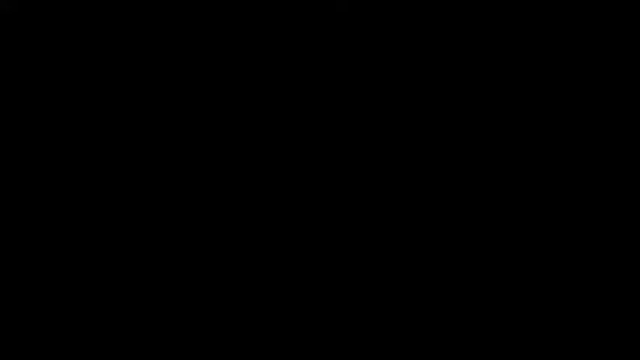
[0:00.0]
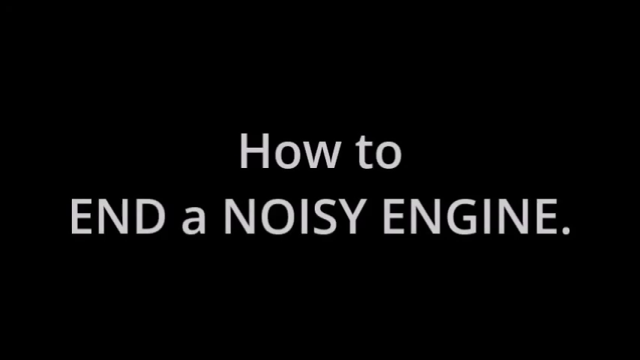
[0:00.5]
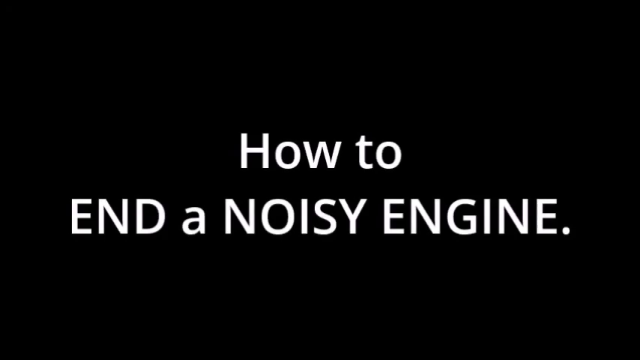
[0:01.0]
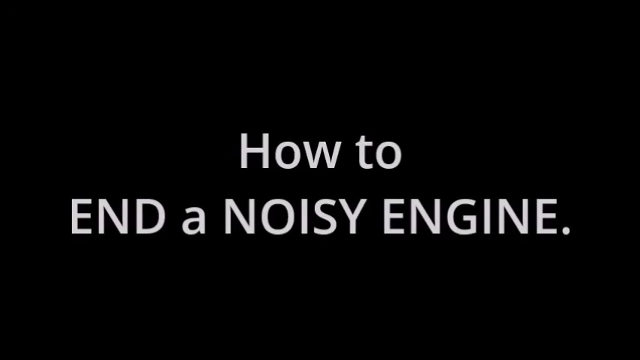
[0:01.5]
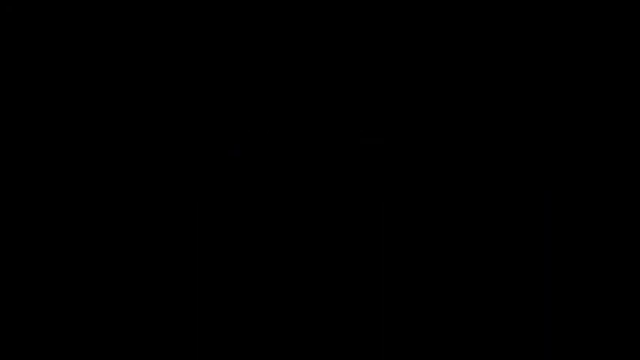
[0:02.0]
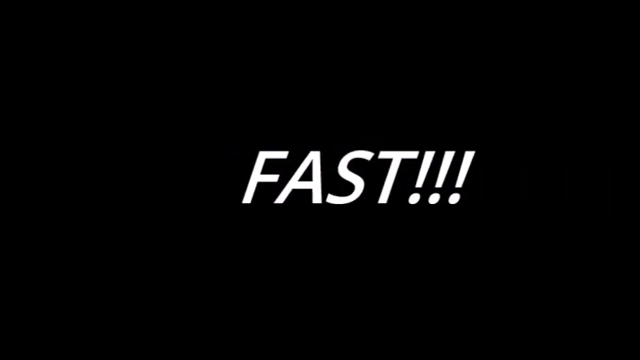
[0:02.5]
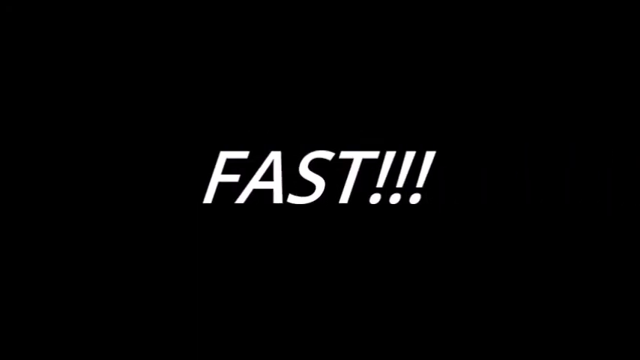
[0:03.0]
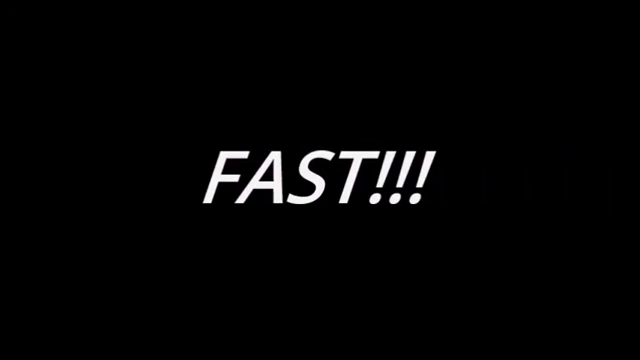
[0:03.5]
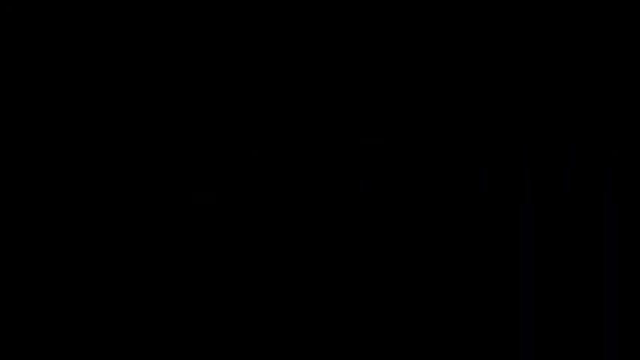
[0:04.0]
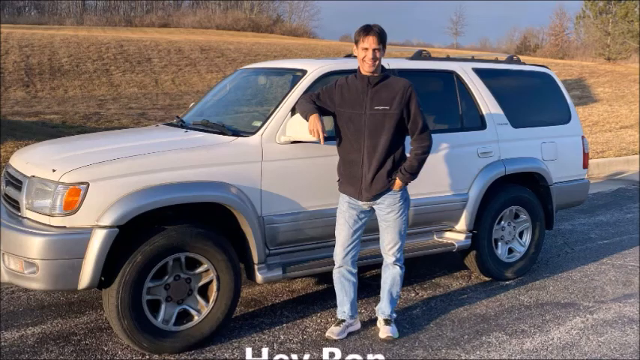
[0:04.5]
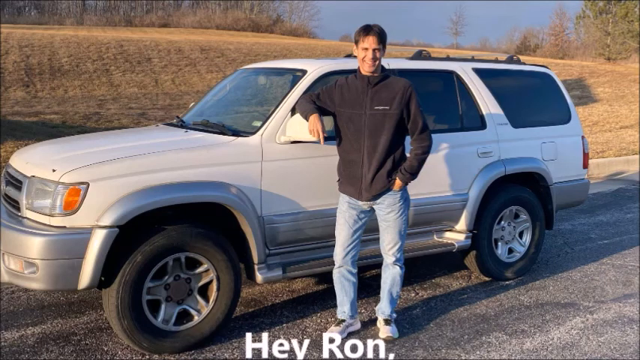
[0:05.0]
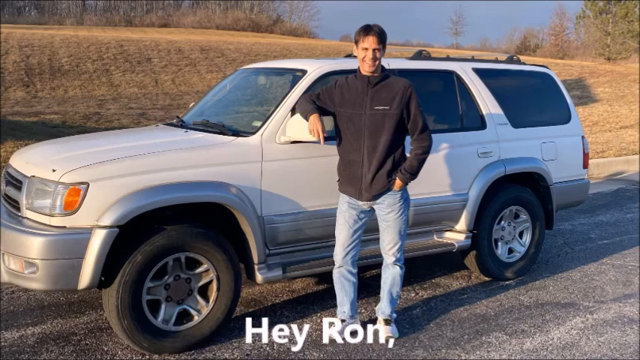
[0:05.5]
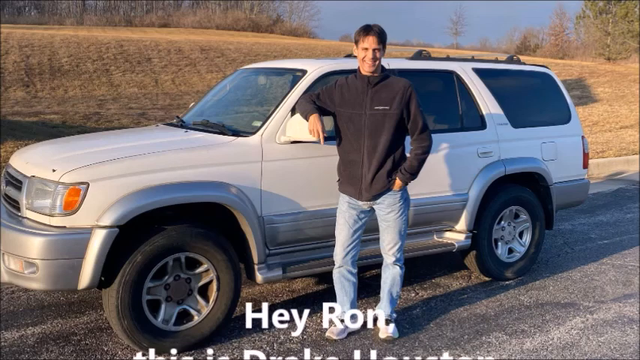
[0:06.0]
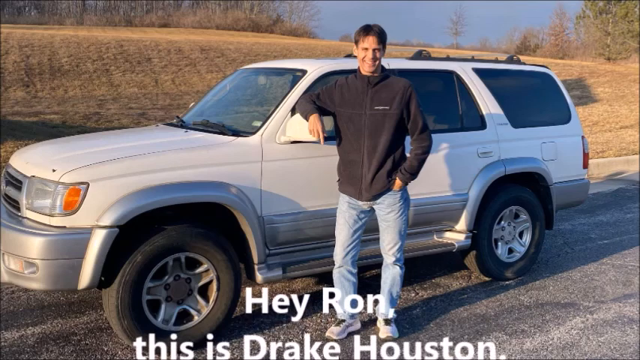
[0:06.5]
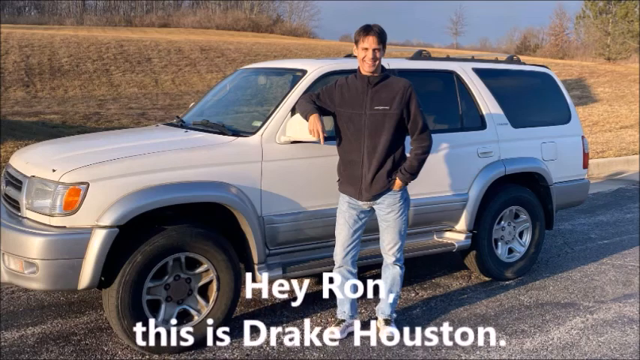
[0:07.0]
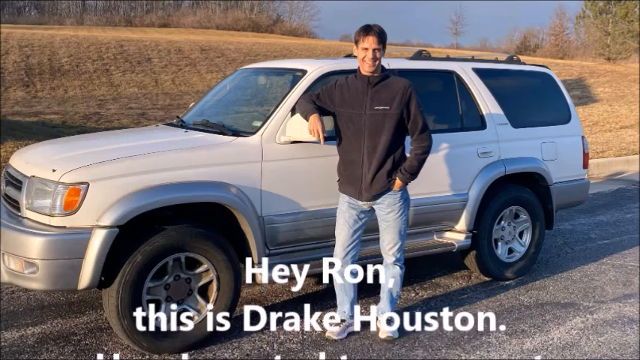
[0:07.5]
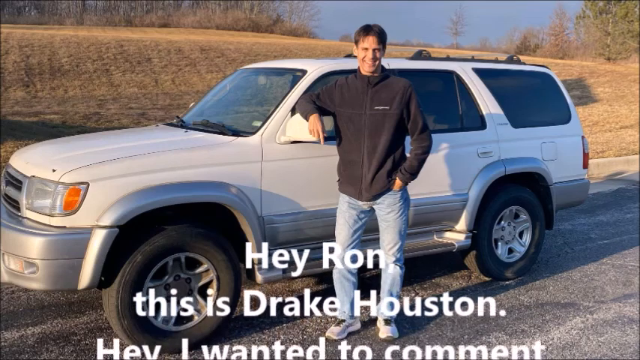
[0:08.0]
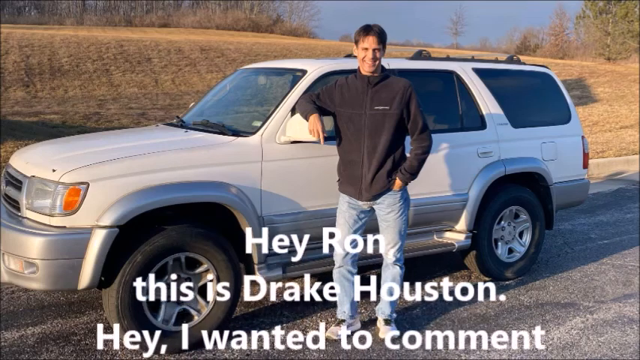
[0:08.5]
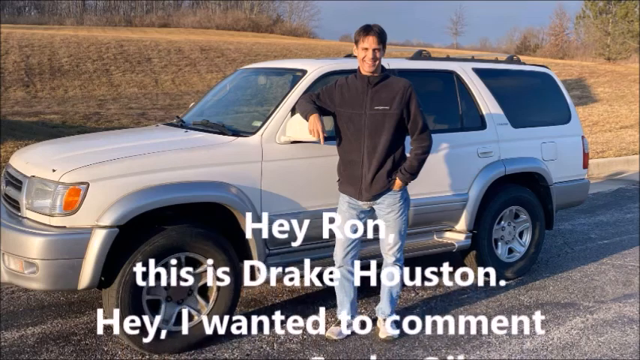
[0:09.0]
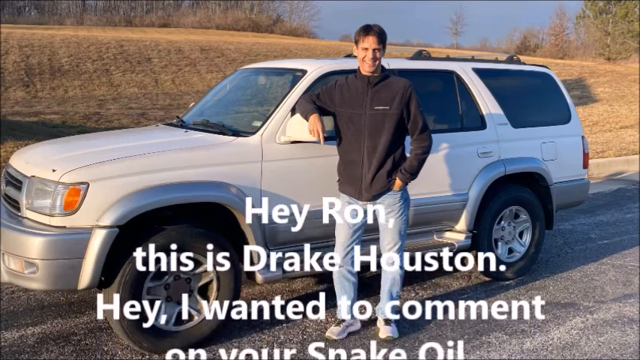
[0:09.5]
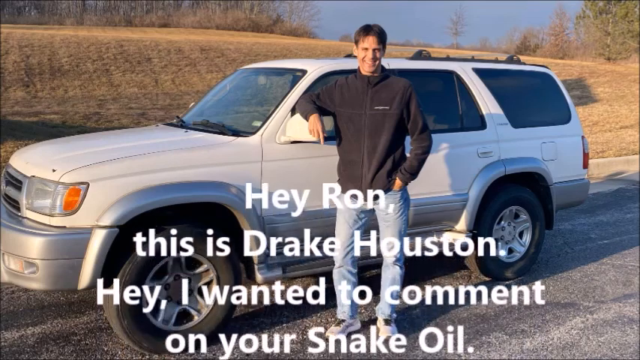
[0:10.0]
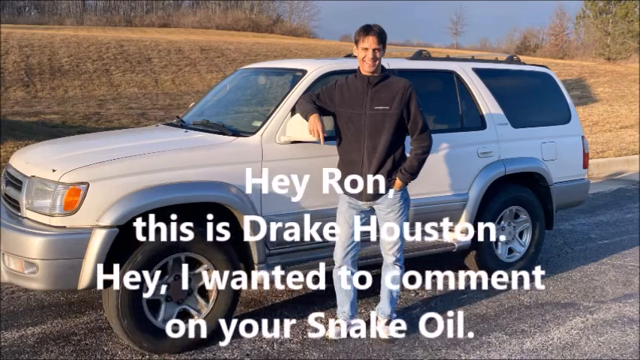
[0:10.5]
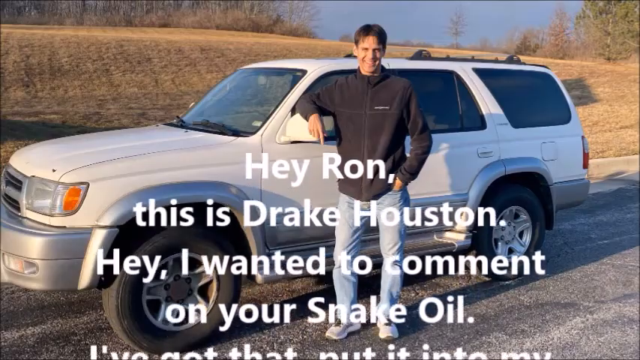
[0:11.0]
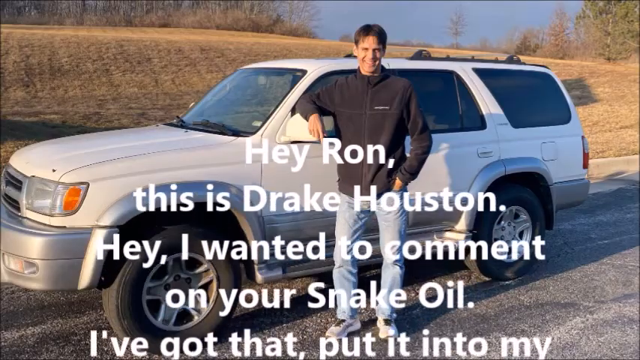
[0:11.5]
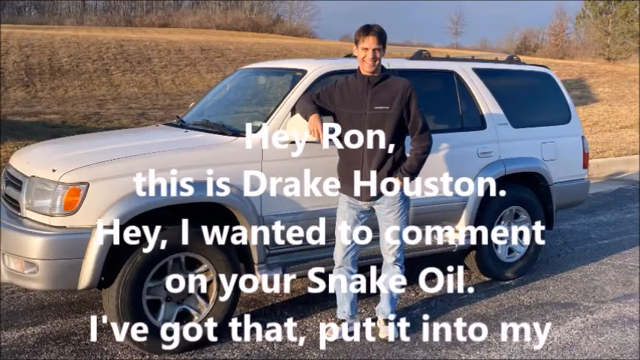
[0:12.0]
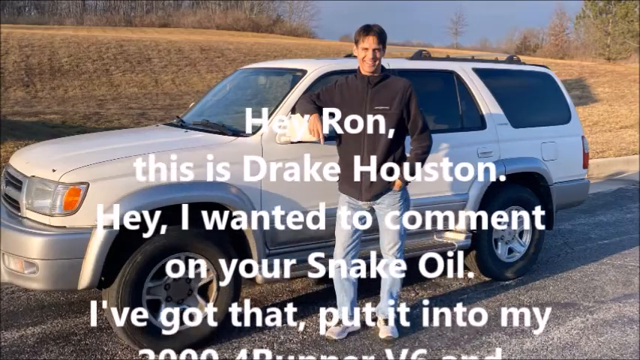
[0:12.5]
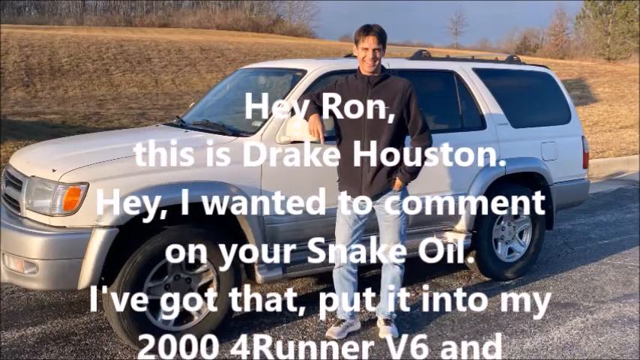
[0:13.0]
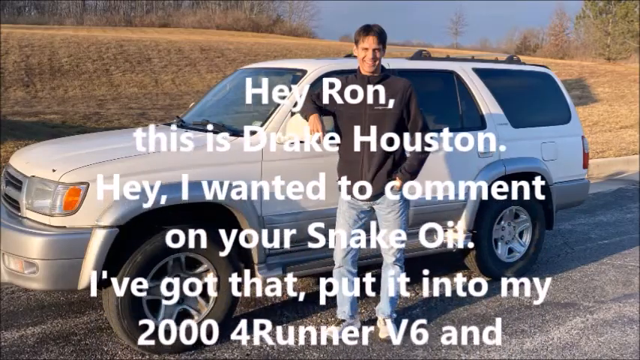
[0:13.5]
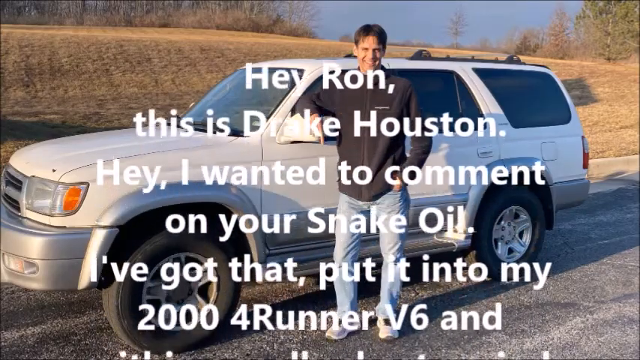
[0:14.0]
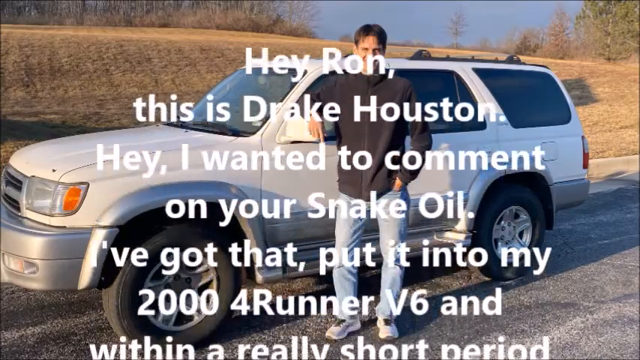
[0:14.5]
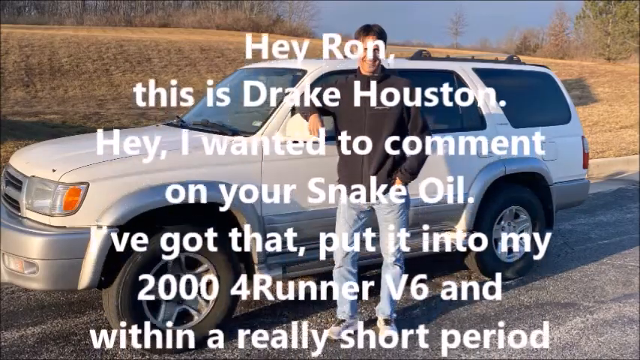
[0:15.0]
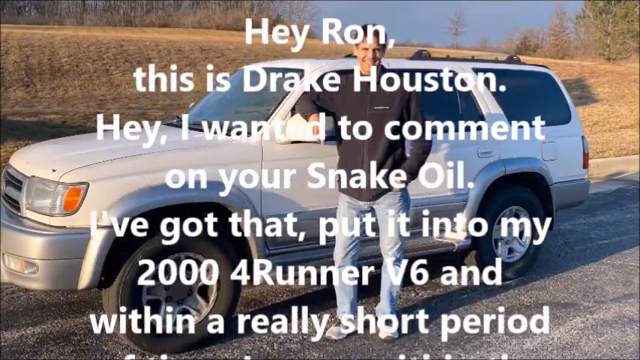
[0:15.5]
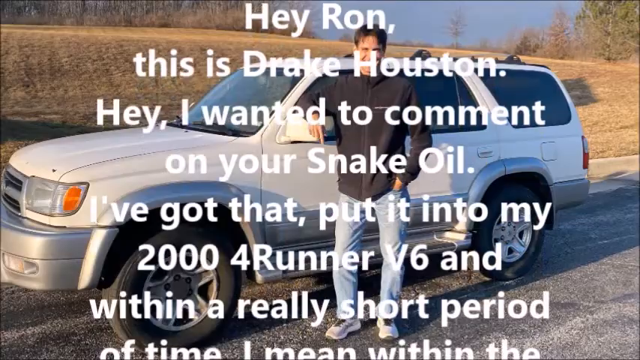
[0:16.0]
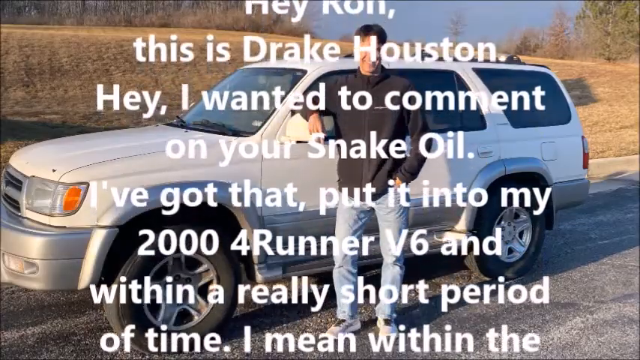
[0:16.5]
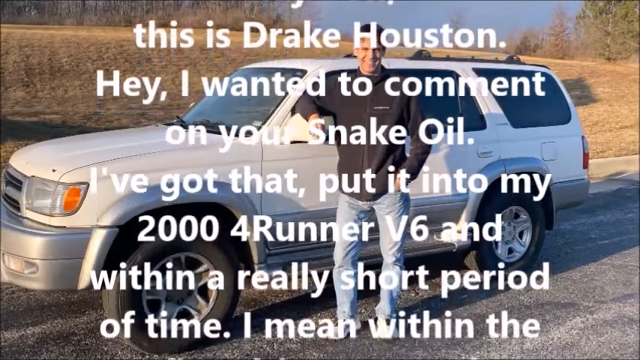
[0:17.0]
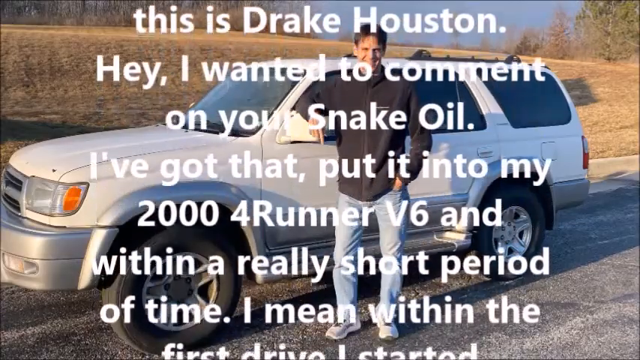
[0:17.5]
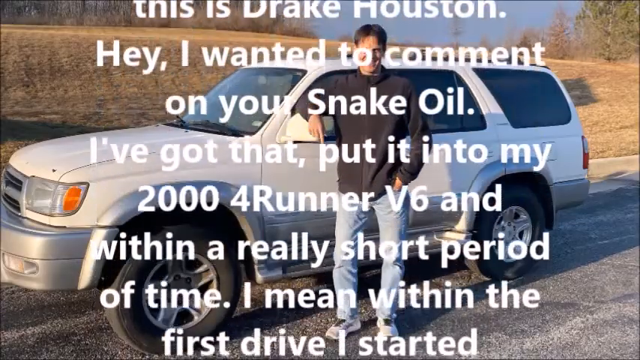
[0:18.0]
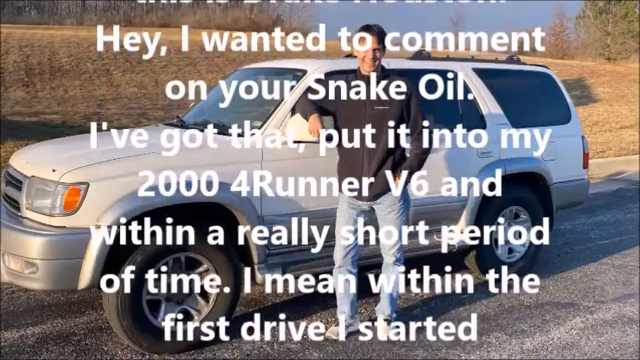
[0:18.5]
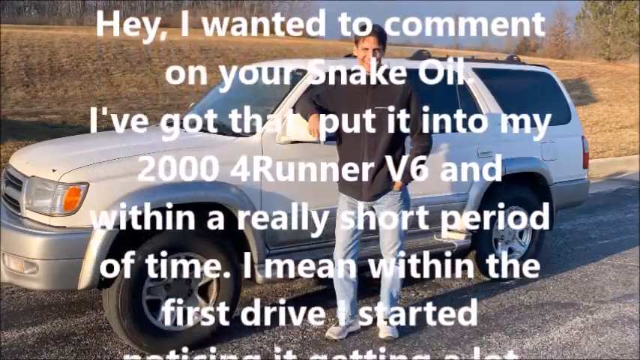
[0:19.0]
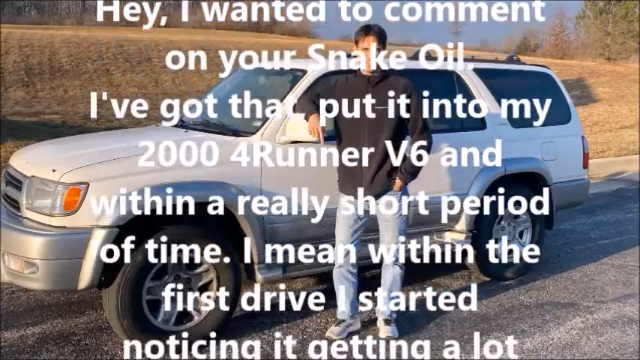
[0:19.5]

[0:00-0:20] A black screen shows the text "how to end a noisy engine." It then transitions to the word "fast" followed by three exclamation points. The screen changes to a background of a white SUV with a man standing in front of it, smiling, with his arm on the window. White text scrolls from the bottom to the top of the screen, reading: "Hey Ron, this is Drake Houston. Hey, I wanted to comment on your snake oil. I've got that. Put it into my 2004 runner V6. And with a really short period of time, I mean, with the first drive started, I noticed it getting a lot quieter." The ground behind the SUV looks like it may be a rough asphalt or gravel road. Behind it is a hill with short, brown, dried-out grass, and trees on the hilltop.